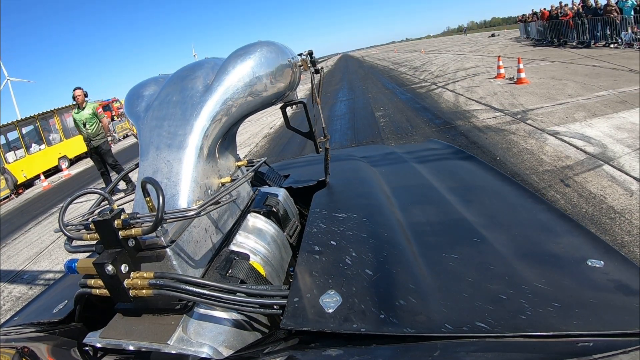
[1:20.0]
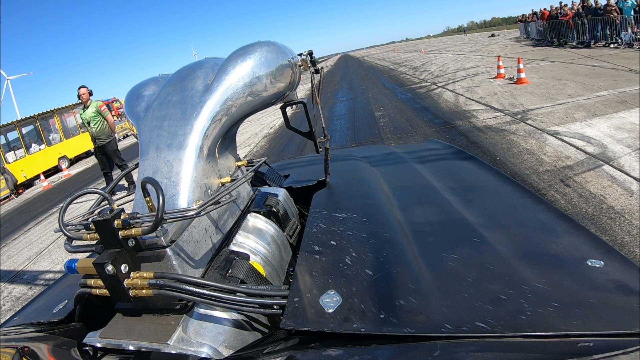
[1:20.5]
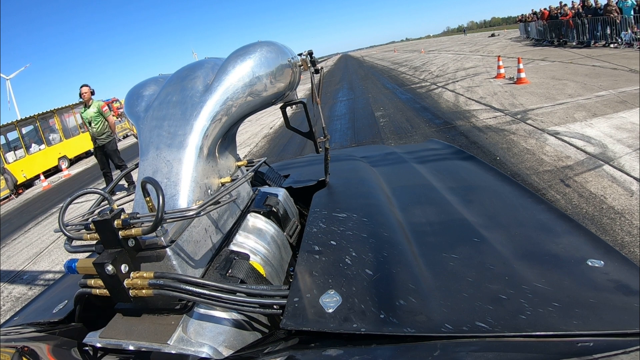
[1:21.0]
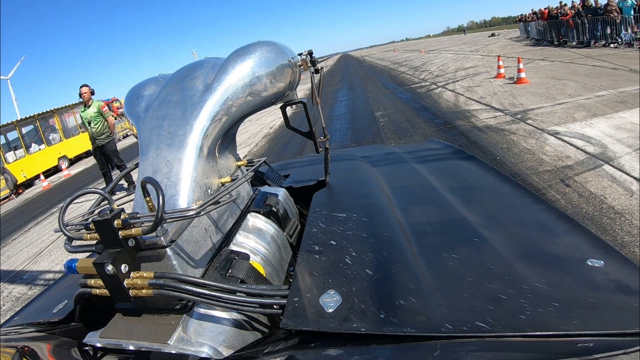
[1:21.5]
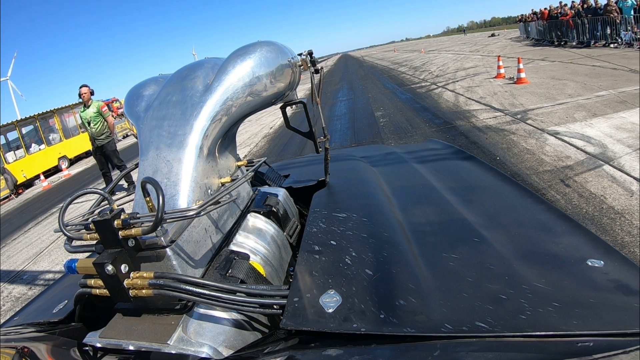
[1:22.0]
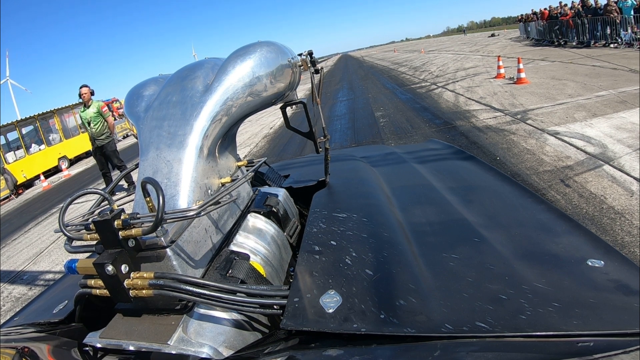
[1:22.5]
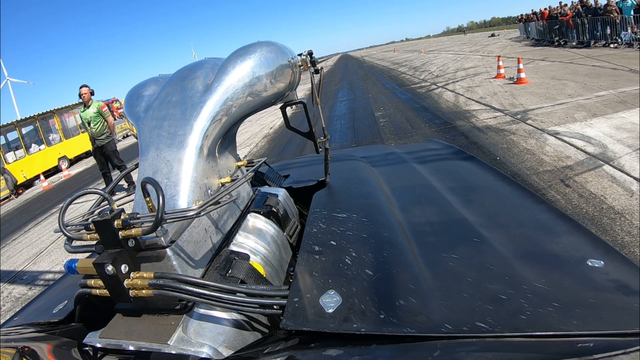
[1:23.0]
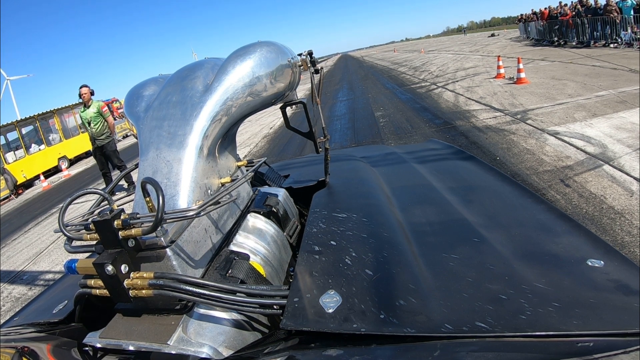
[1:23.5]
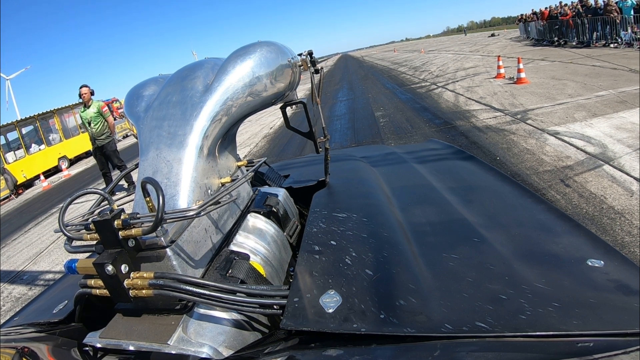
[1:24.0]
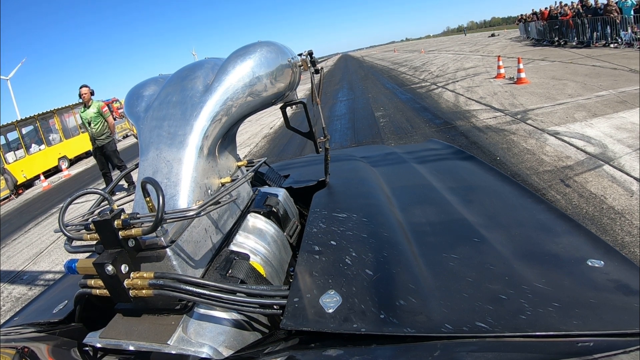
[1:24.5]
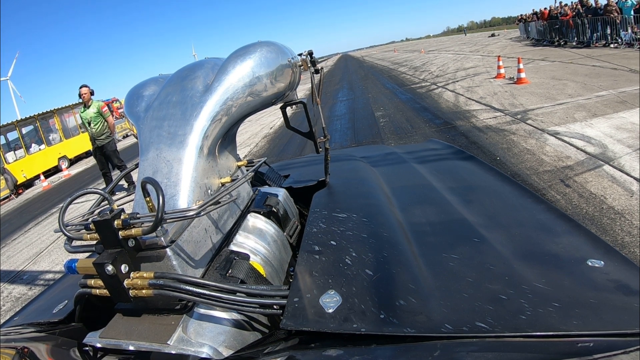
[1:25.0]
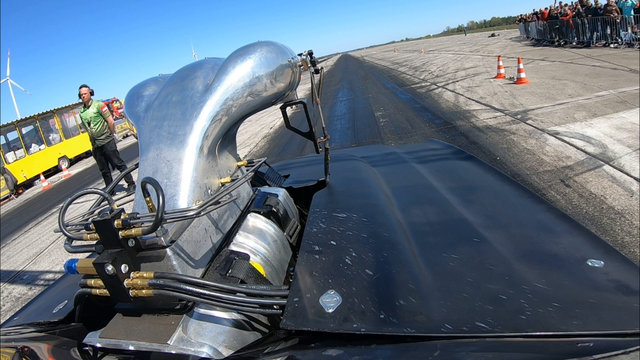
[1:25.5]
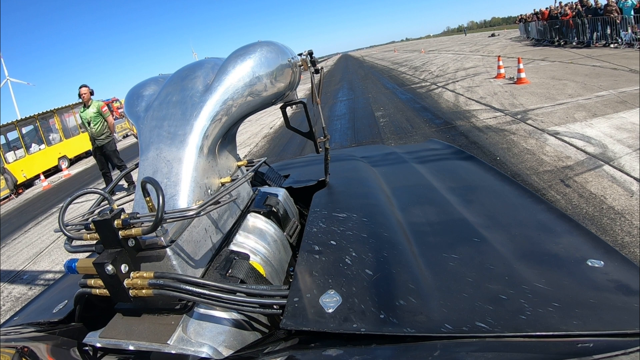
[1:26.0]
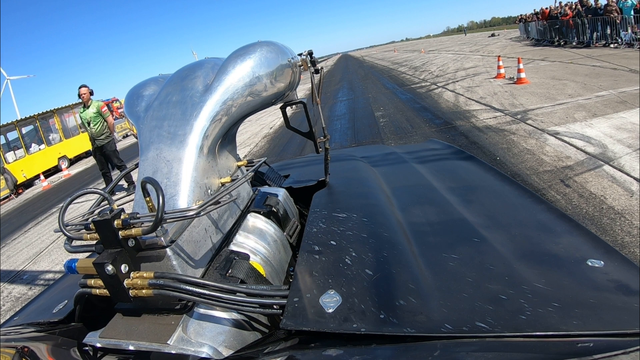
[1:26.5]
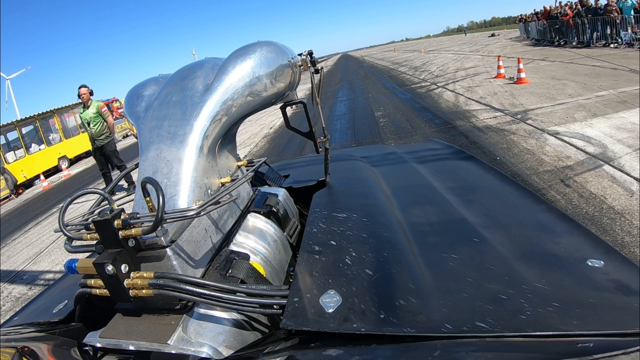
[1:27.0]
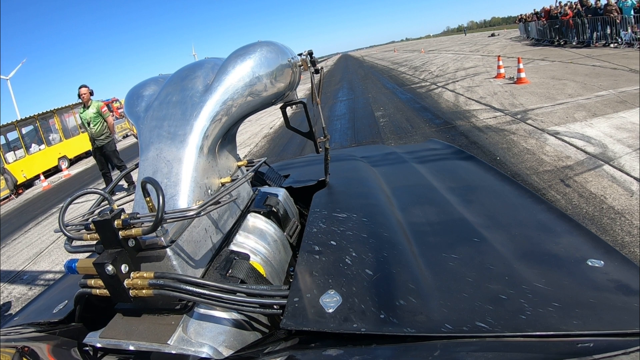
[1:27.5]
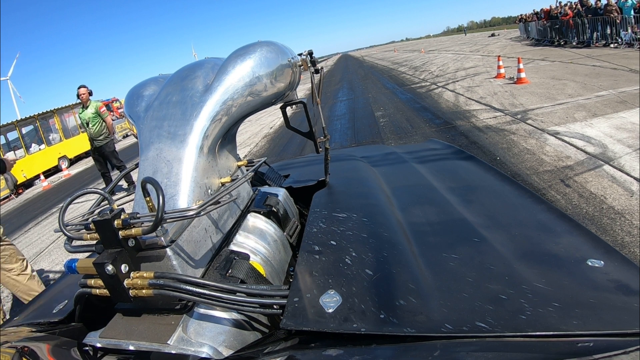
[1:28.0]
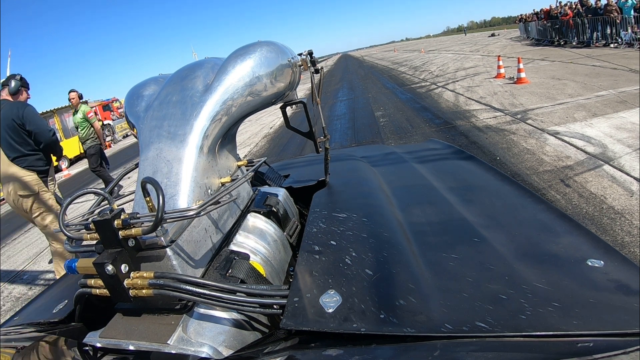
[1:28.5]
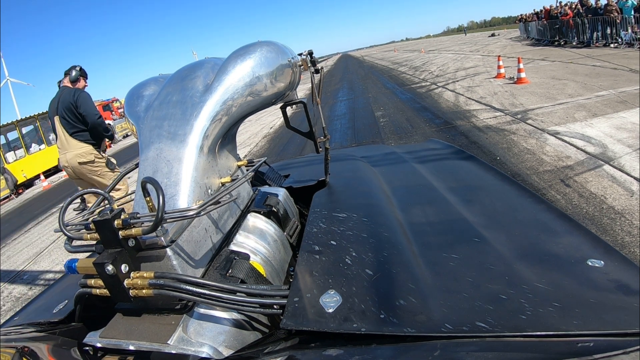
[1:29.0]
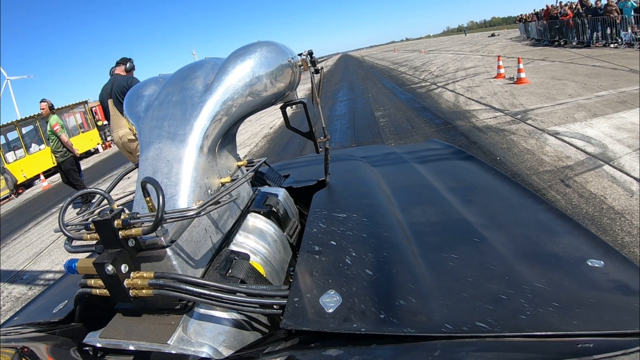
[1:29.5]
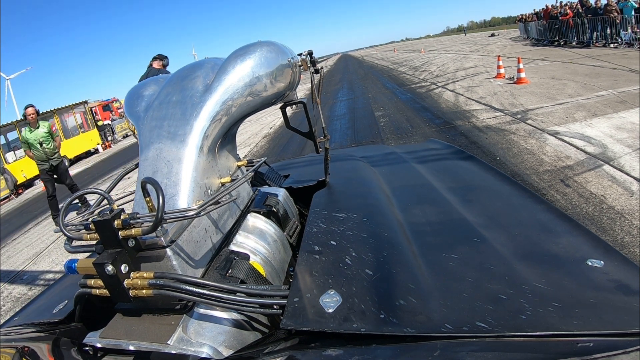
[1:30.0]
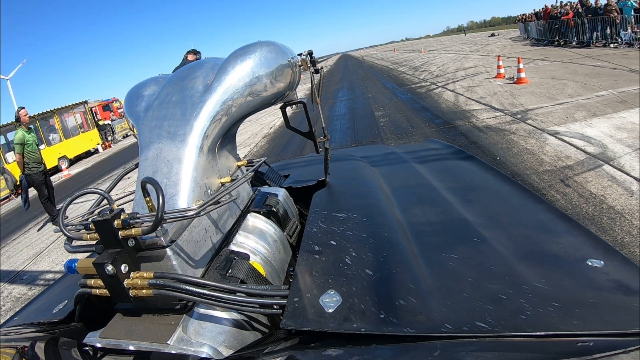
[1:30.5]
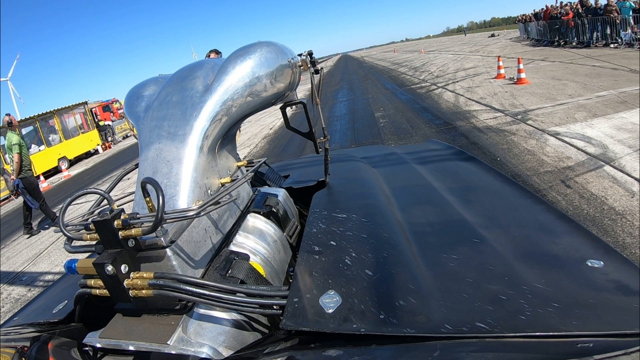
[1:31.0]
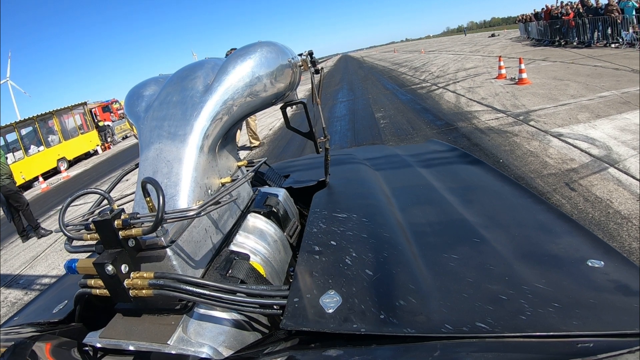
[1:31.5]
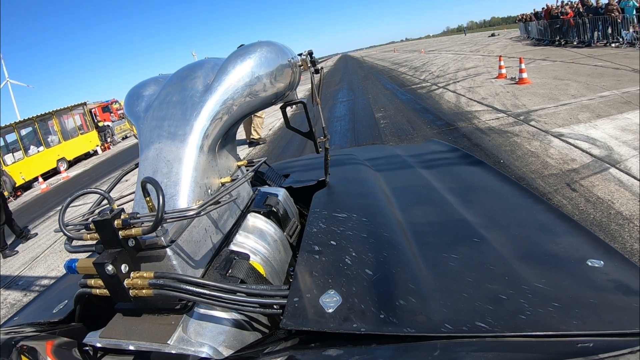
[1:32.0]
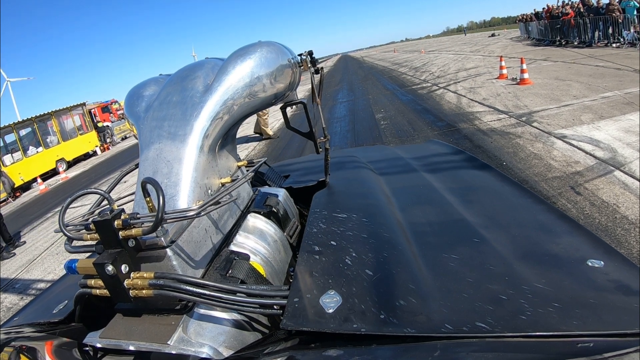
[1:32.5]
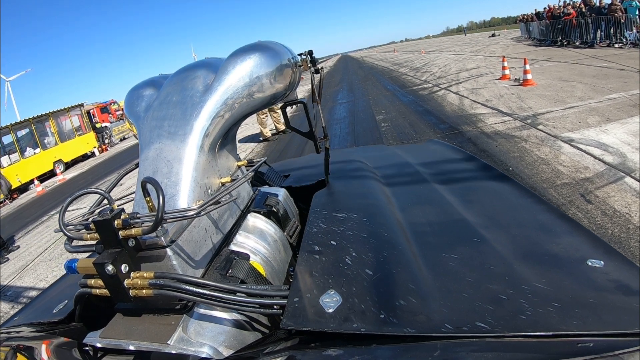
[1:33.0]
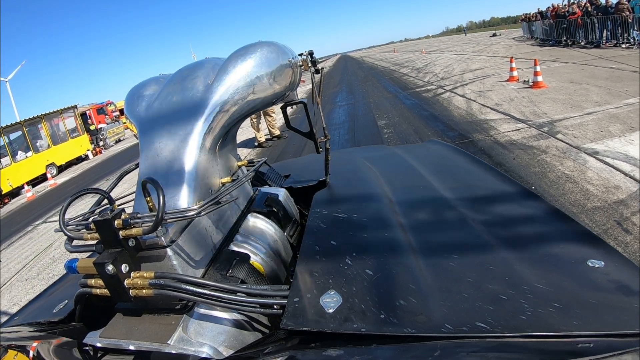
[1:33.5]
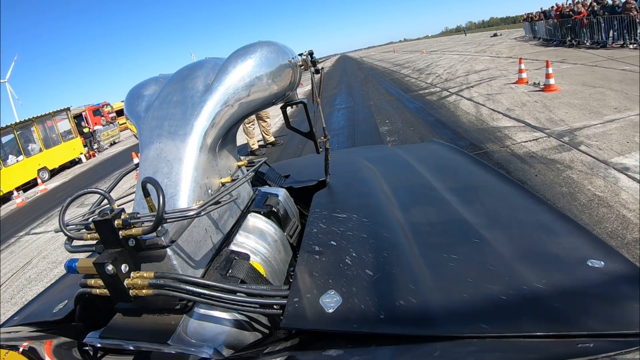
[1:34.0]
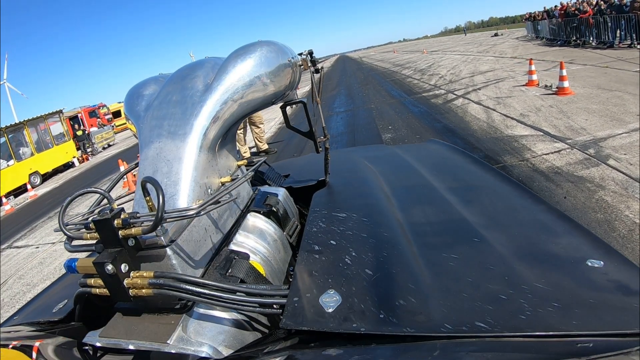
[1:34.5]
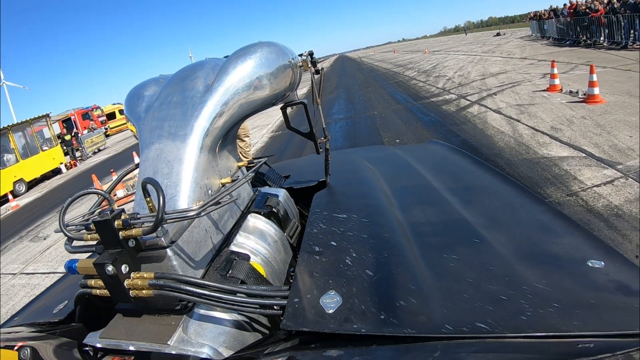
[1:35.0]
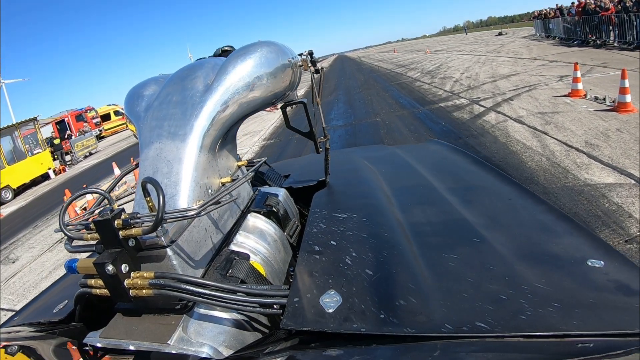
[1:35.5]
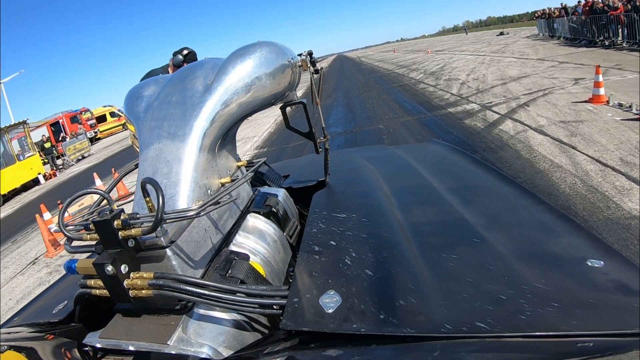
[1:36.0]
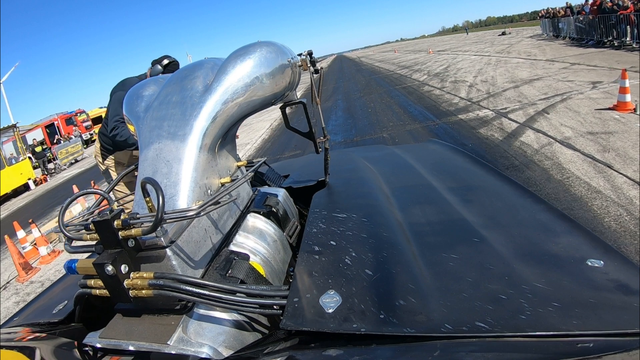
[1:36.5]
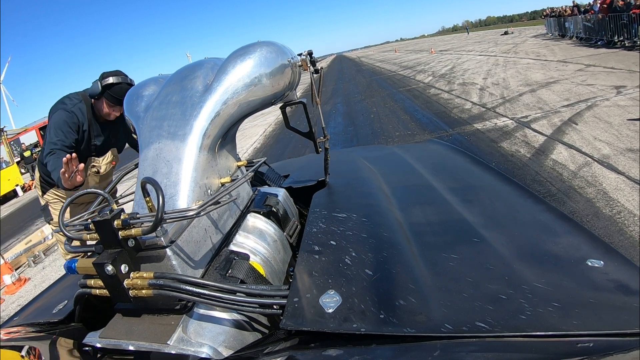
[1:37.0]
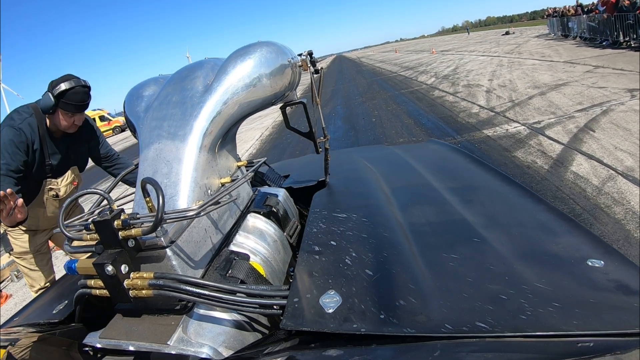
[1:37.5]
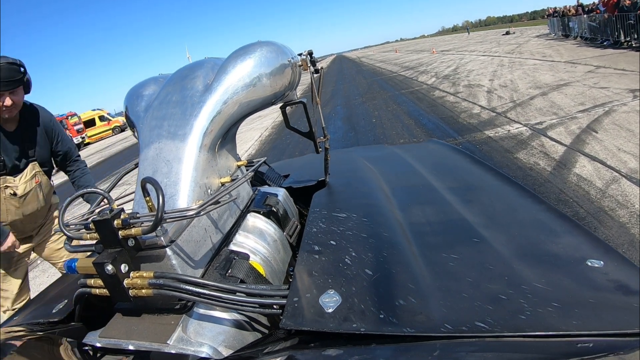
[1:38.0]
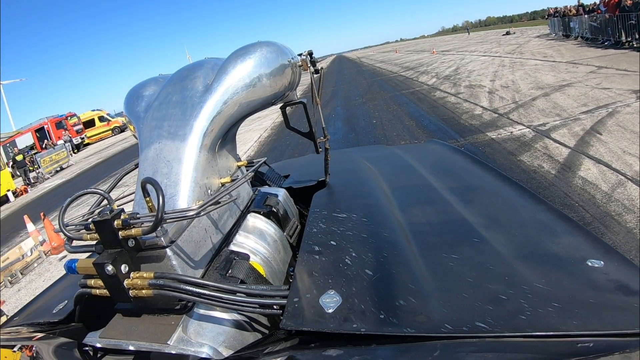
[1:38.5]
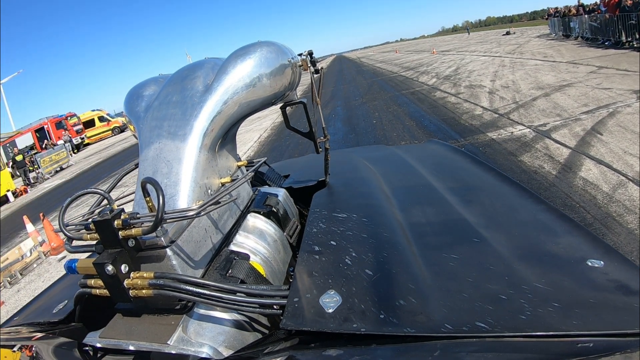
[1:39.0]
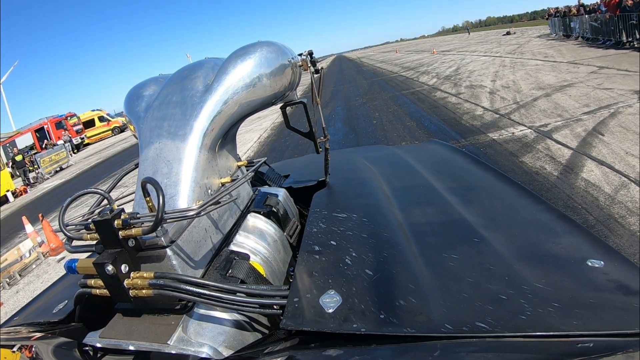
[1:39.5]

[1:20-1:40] A gray drag racing car is on a large strip that is black in the middle and gray on the sides, with orange cones all around it. The car drives very slowly forward. A crowd is on the right-hand side and cars are on the left-hand side. A man with headgear appears and leans over the car. On the left a yellow bus is visible, with a windmill in the distance, and trees are on the right. Both men have headgear on to protect their ears. At the end, the man holds his hand up to stop the car as it drives forward. The car is dark gray, with an engine or something silver on top of the hood with wires coming out of it, and some dirt spattered on the hood. Two orange and white cones are to the right side of the car.